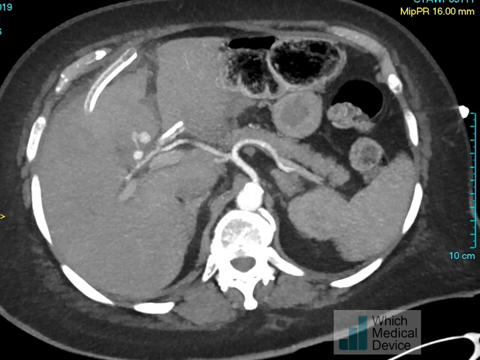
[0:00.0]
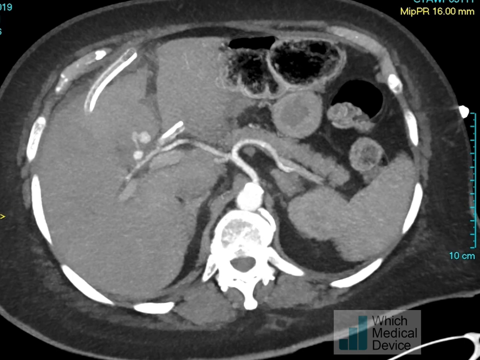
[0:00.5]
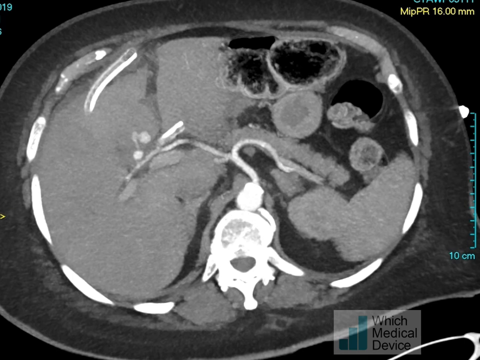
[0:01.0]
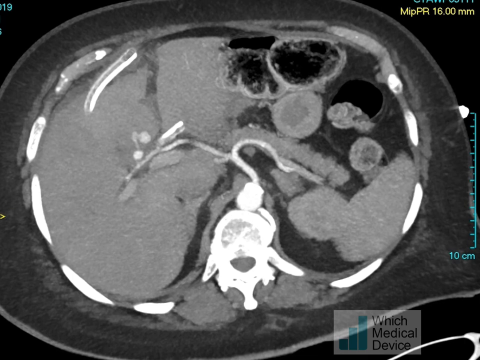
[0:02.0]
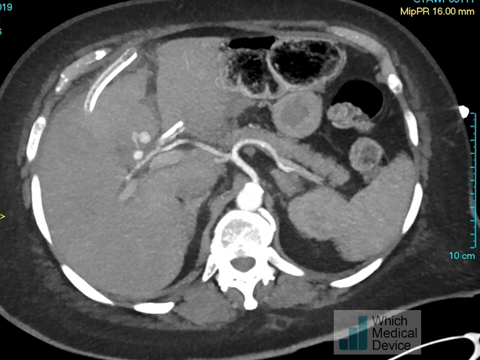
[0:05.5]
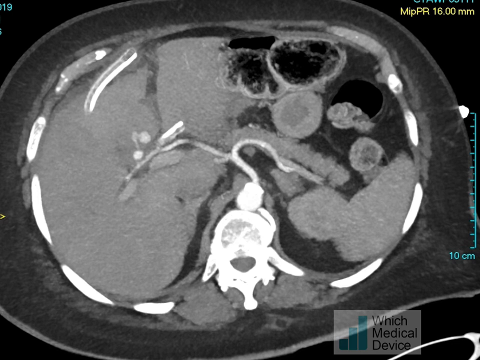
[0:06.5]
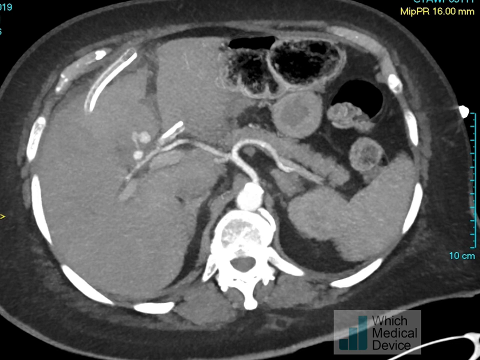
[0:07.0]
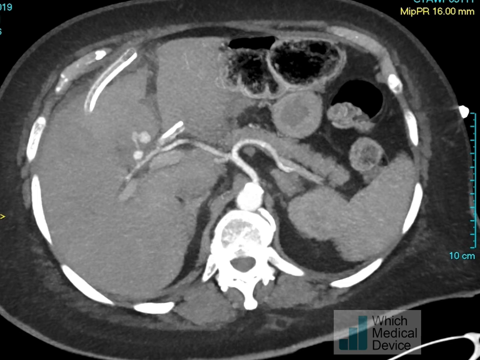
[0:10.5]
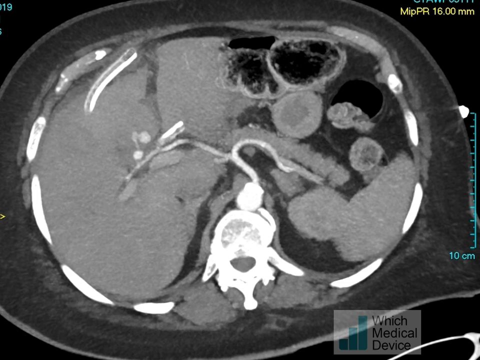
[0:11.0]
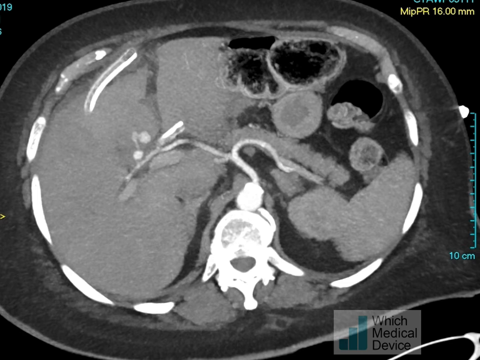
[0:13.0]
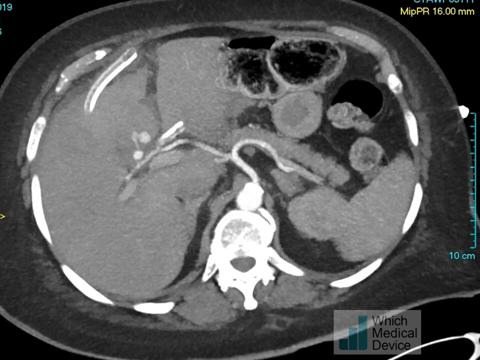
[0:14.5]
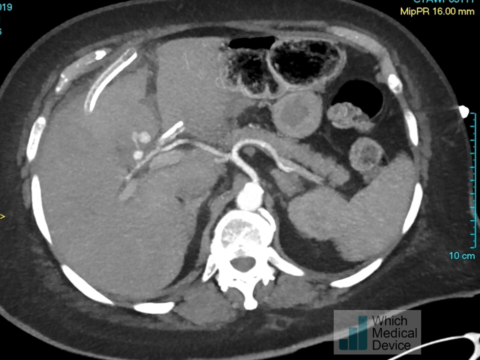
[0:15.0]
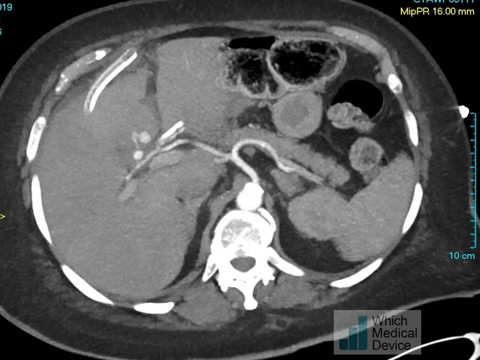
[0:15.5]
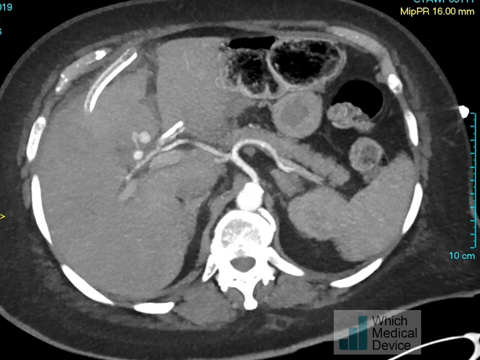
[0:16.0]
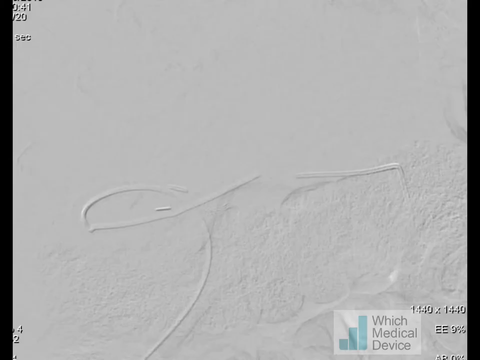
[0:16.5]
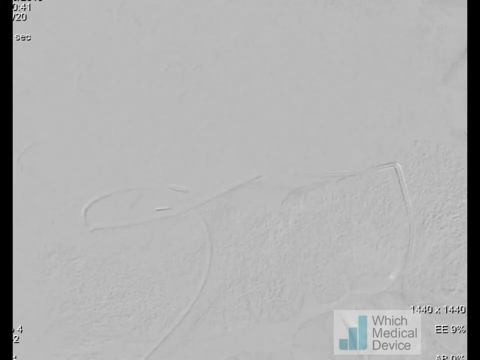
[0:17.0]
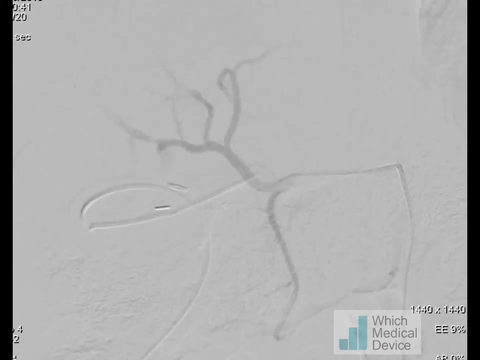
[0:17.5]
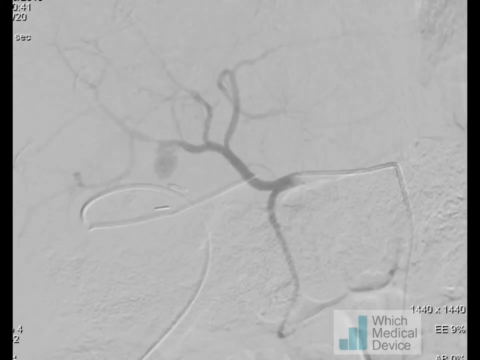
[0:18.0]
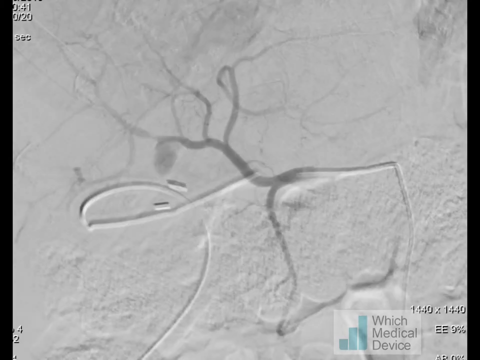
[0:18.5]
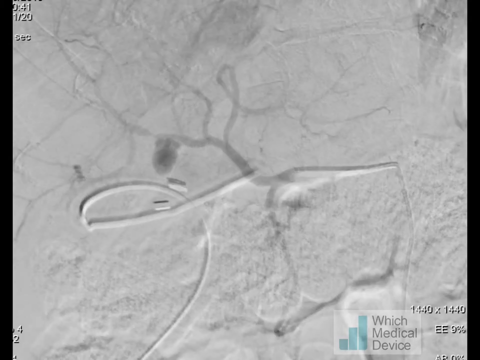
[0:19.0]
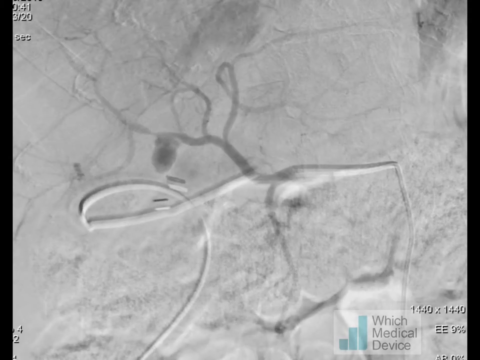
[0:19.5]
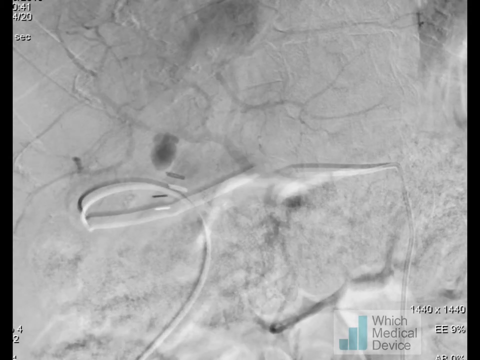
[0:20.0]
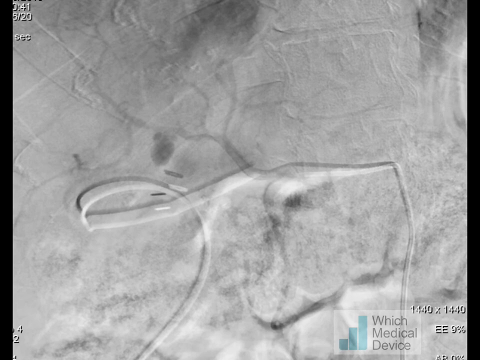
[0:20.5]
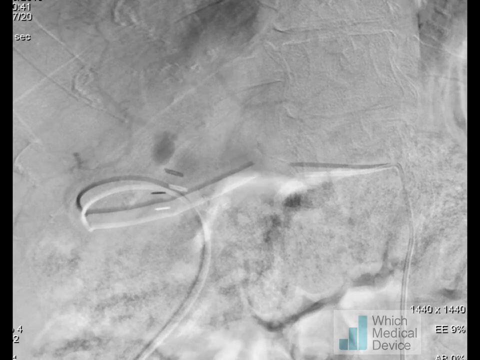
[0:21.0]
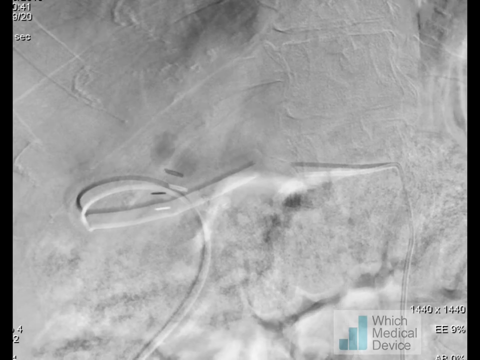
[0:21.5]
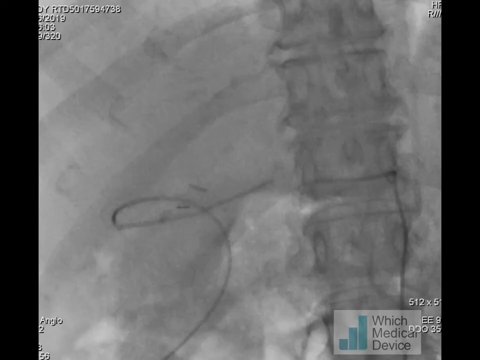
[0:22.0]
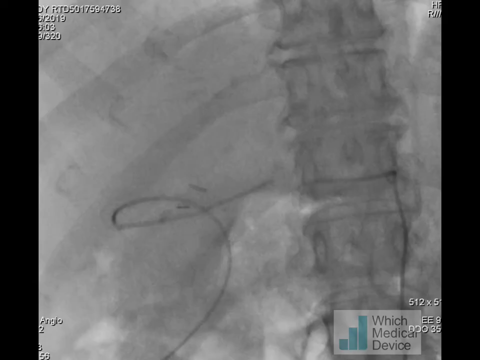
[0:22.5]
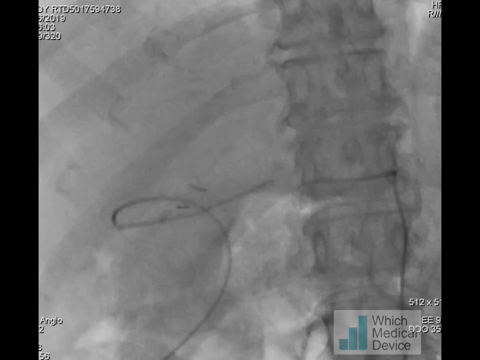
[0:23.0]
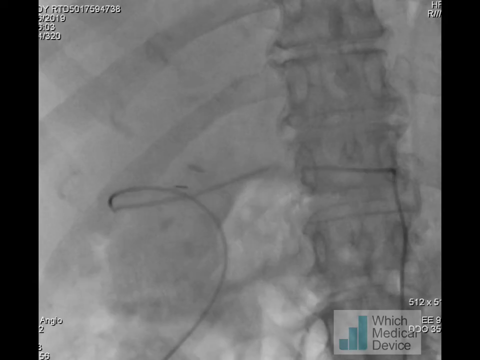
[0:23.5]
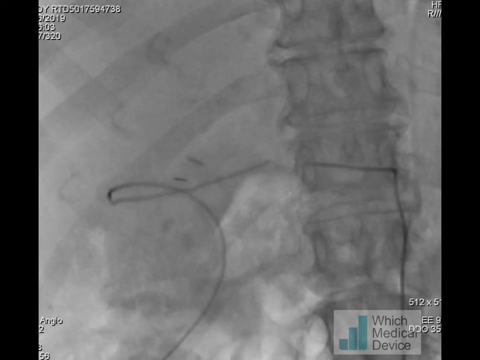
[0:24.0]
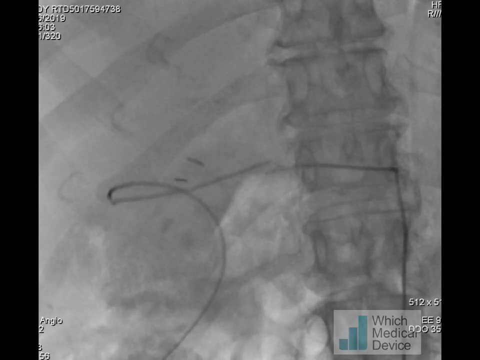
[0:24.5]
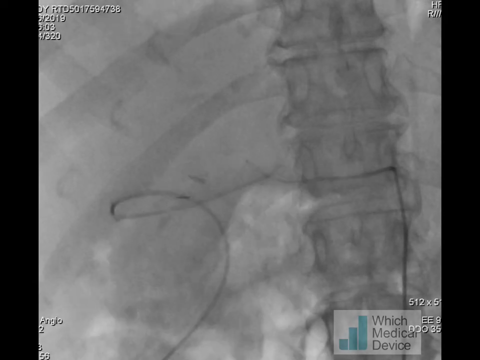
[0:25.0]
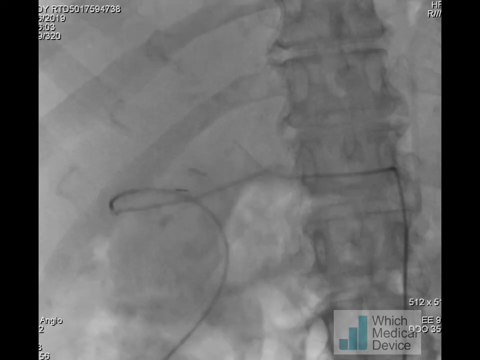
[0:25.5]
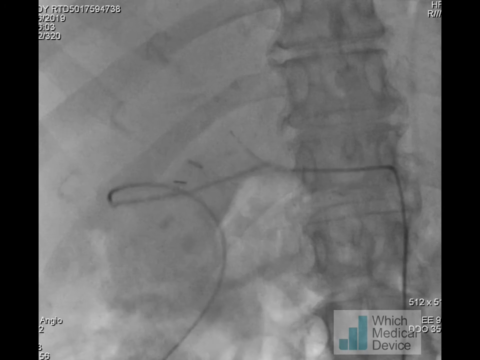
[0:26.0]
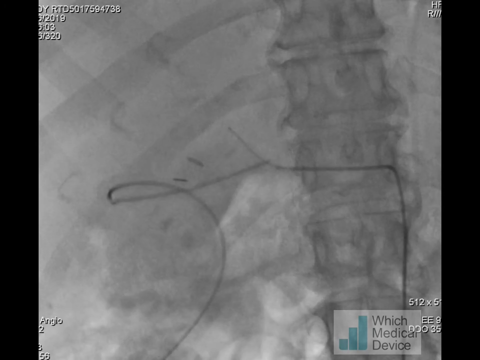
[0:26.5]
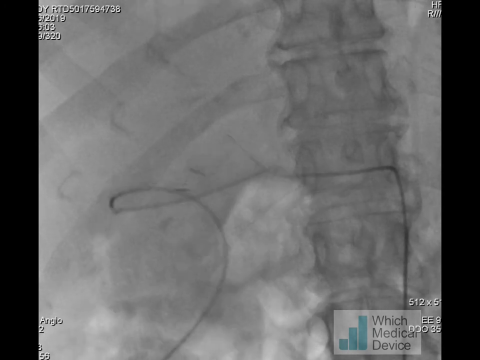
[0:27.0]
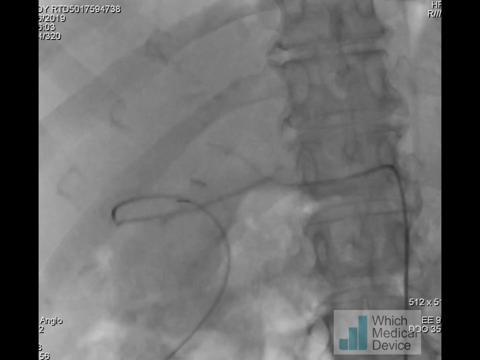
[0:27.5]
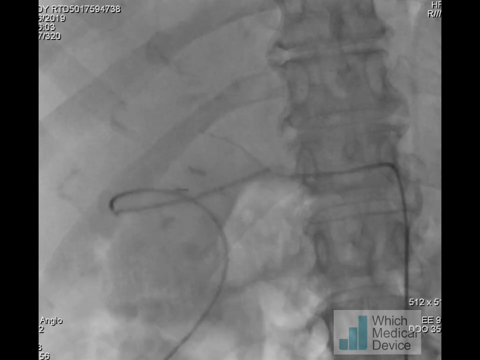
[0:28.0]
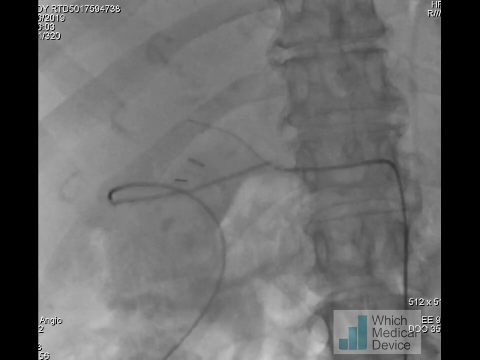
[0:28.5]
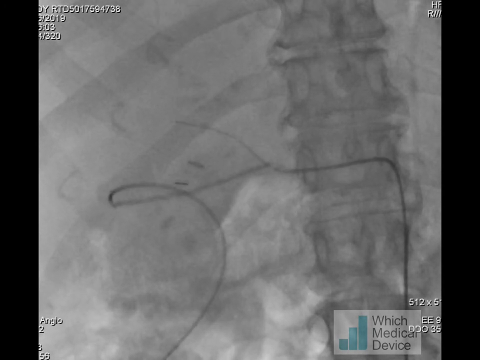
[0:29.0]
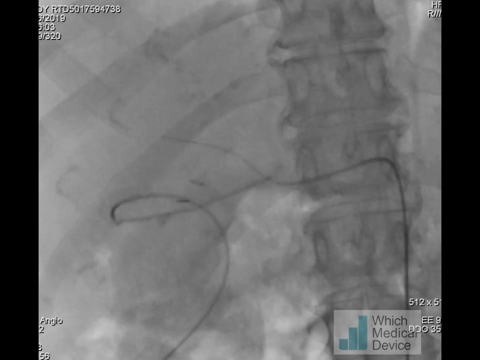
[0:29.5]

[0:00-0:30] A scan of part of a person's body, possibly an MRI or a CT scan, is displayed. Some areas are lit up in white, others are more gray, and others are more black. Text in the corner reads "MIPPR1600MM". As the video continues, blood vessels appear to be shown and lit up. They are near a spine, and a kind of string-like shape moves up and down over this area of the spine. On the right is a measurement tool with increments, showing 10 centimeters at the bottom and extending up part of the middle of the right side of the frame. When the view moves to the playing video, the blood vessels move, and a string, apparently in the background, also moves.